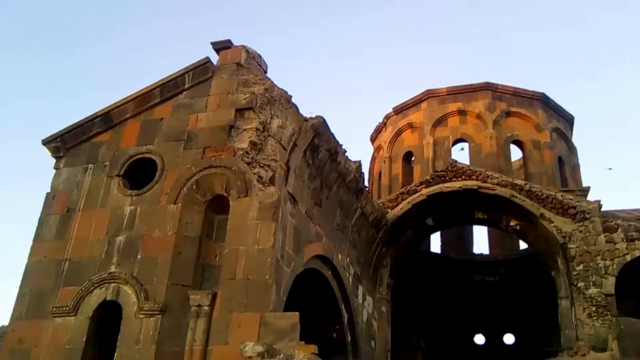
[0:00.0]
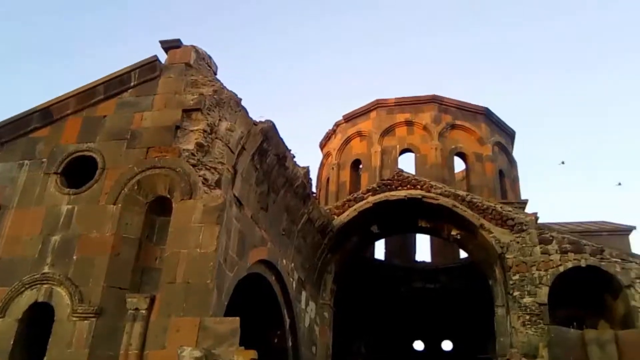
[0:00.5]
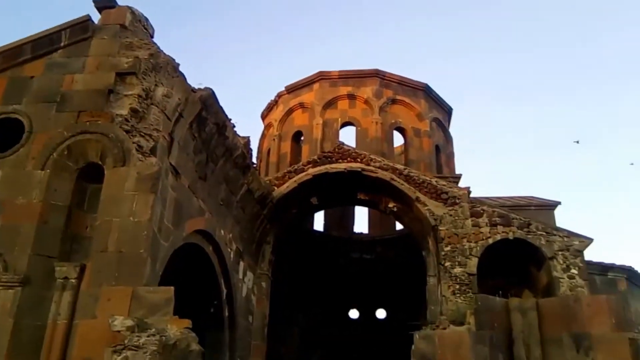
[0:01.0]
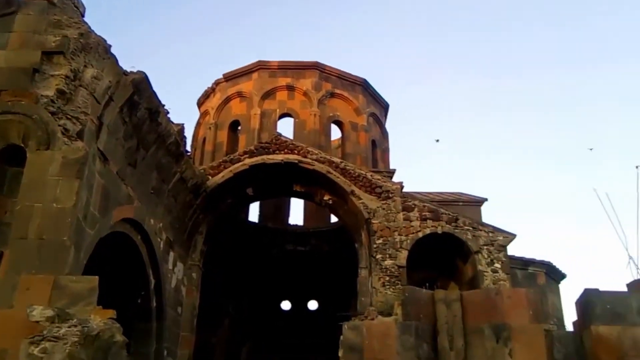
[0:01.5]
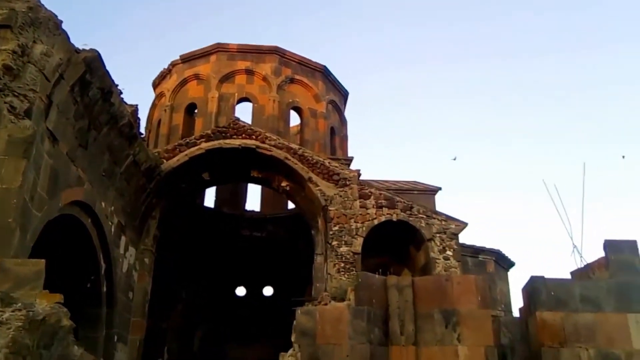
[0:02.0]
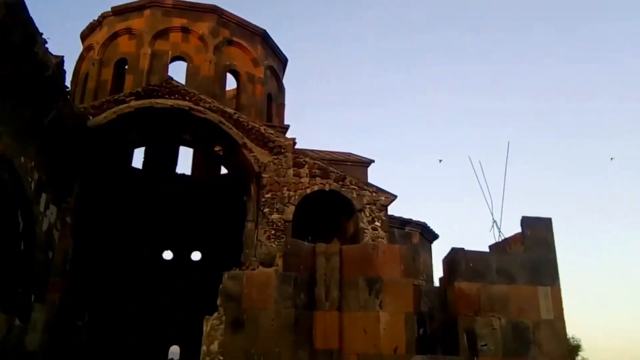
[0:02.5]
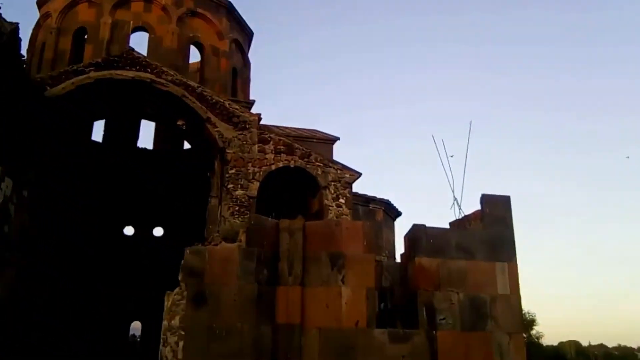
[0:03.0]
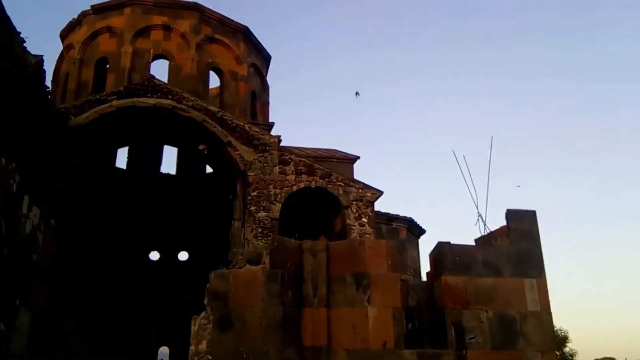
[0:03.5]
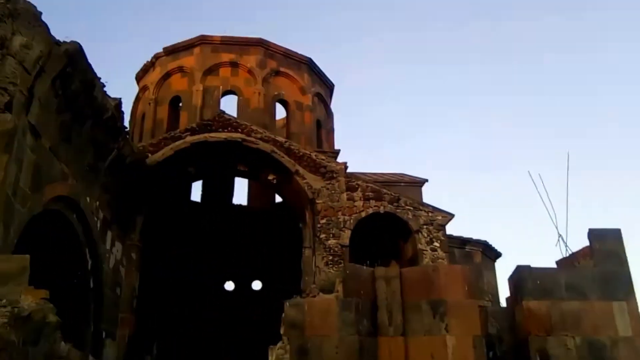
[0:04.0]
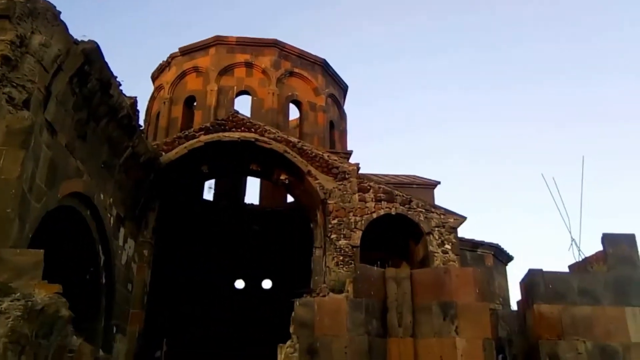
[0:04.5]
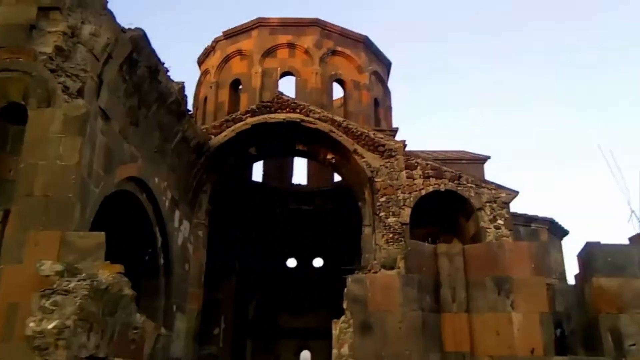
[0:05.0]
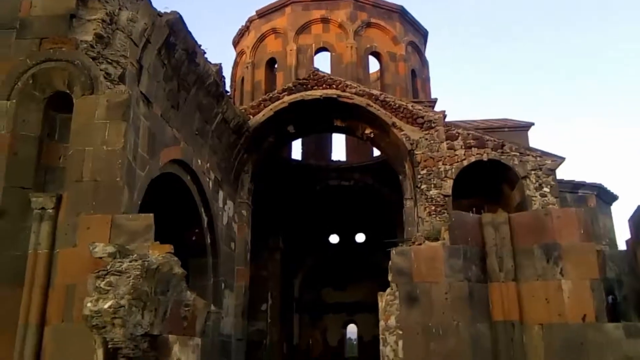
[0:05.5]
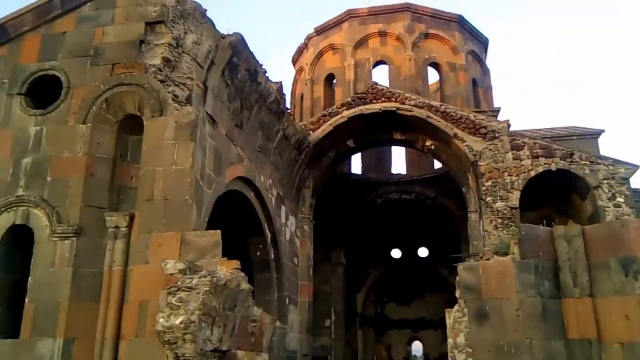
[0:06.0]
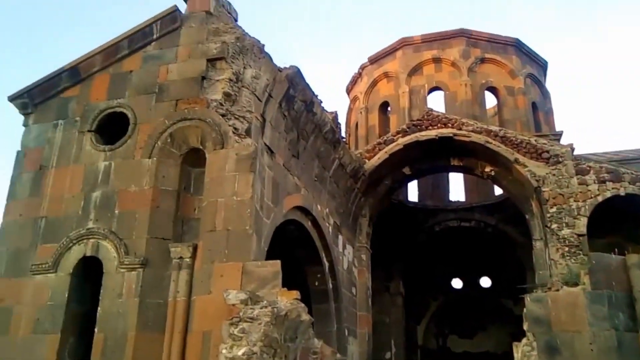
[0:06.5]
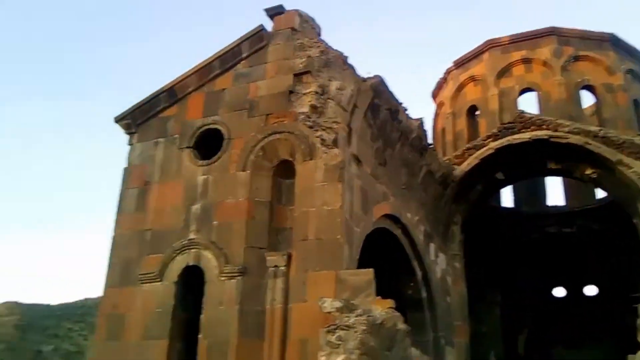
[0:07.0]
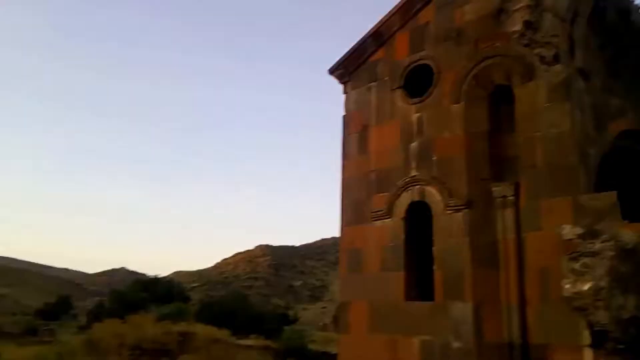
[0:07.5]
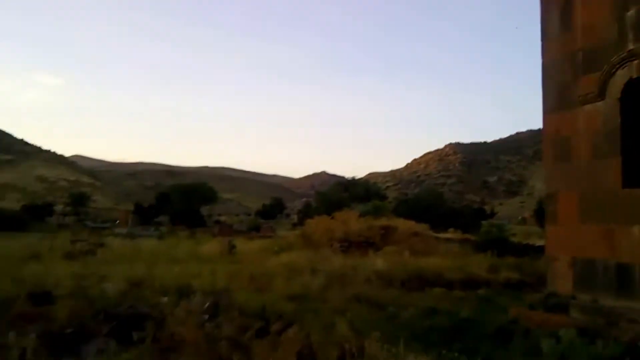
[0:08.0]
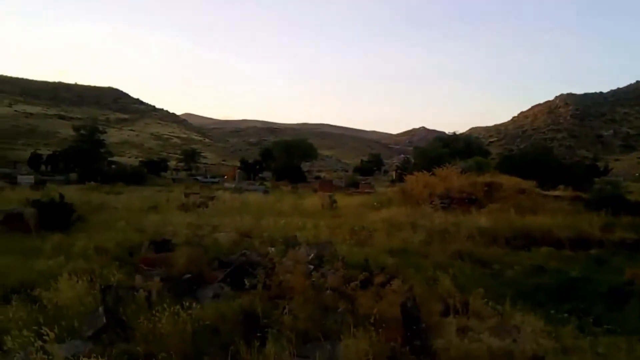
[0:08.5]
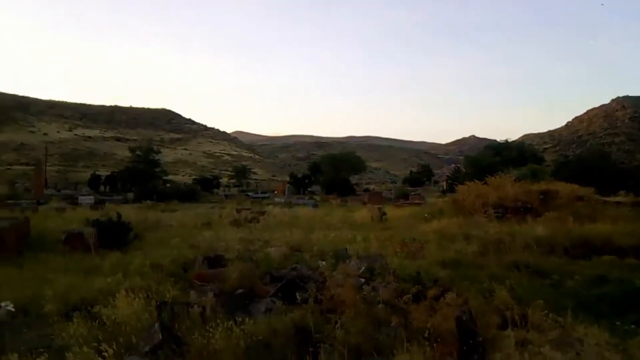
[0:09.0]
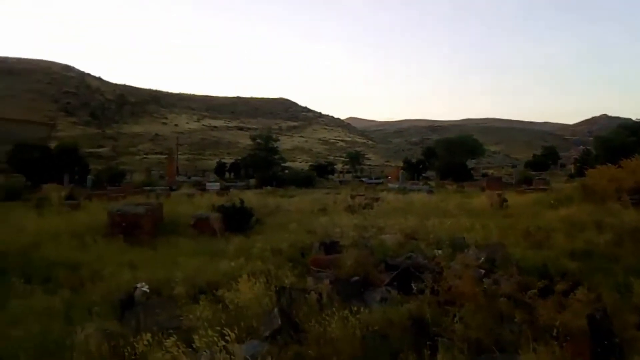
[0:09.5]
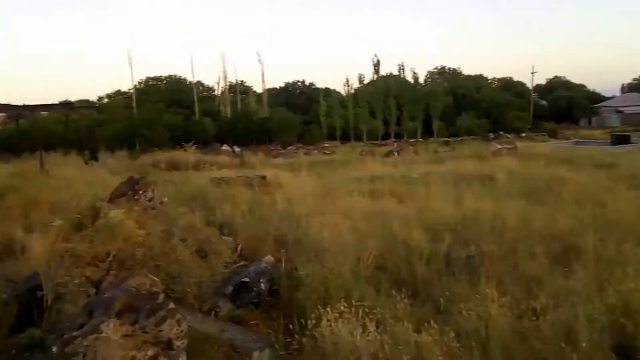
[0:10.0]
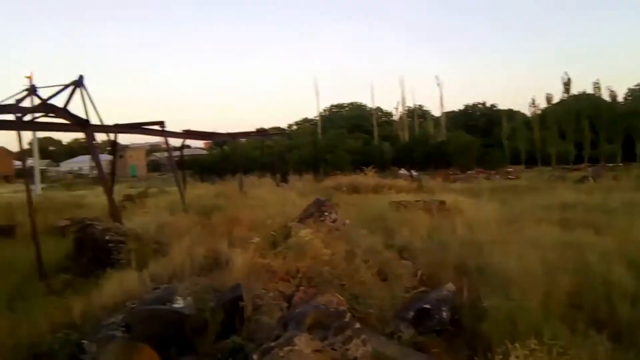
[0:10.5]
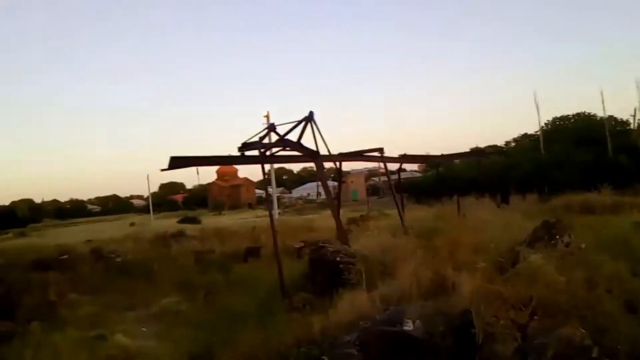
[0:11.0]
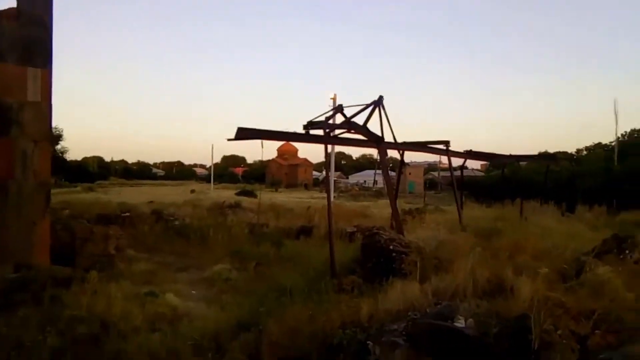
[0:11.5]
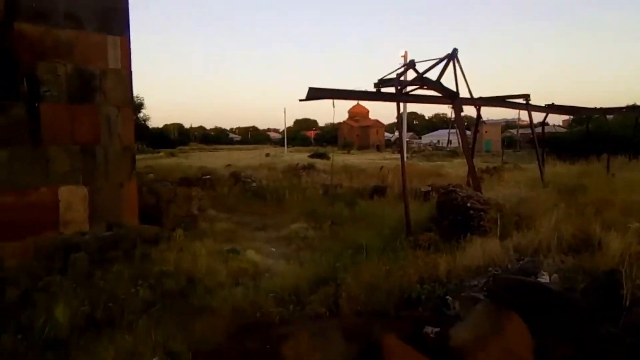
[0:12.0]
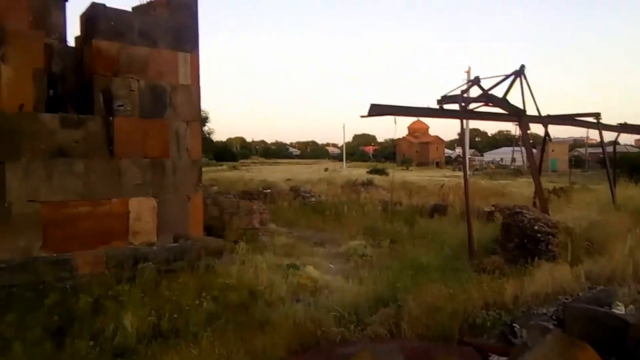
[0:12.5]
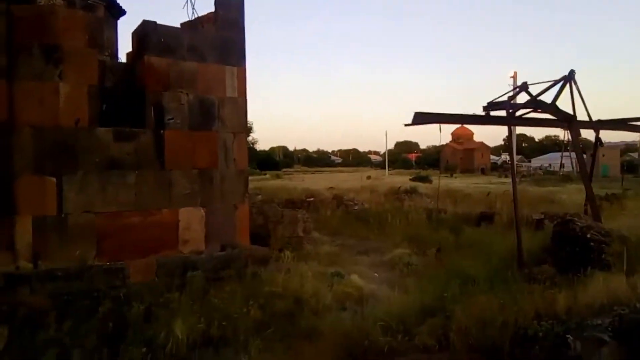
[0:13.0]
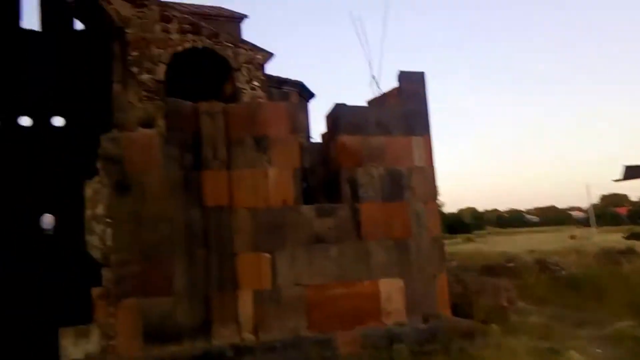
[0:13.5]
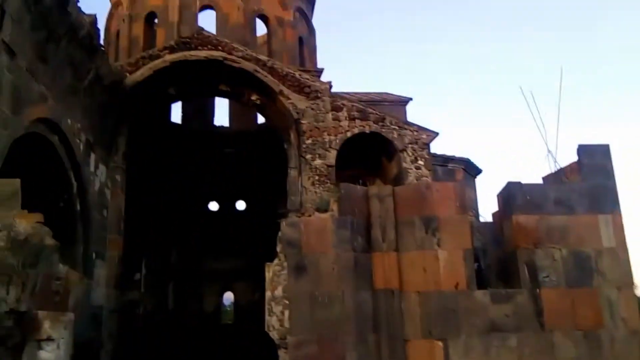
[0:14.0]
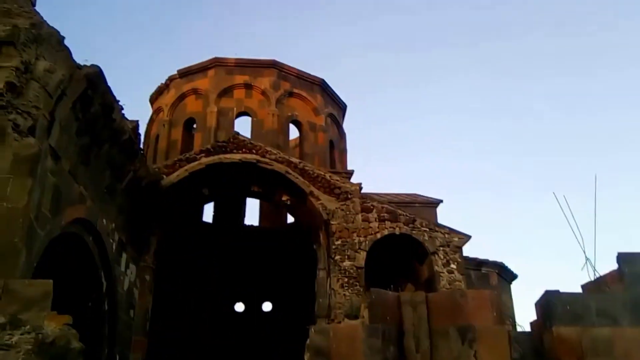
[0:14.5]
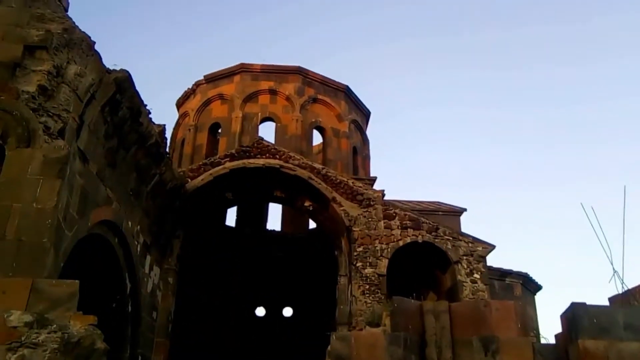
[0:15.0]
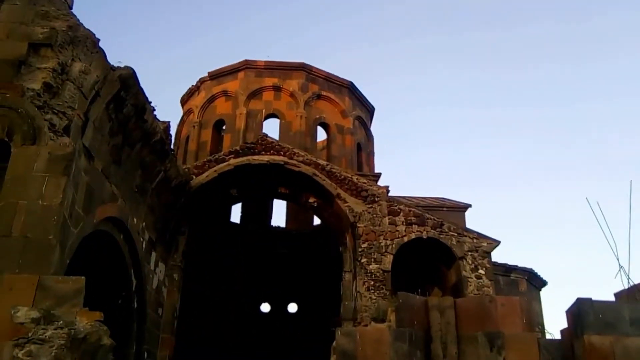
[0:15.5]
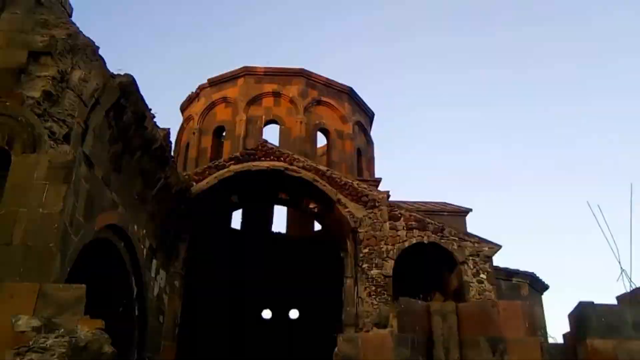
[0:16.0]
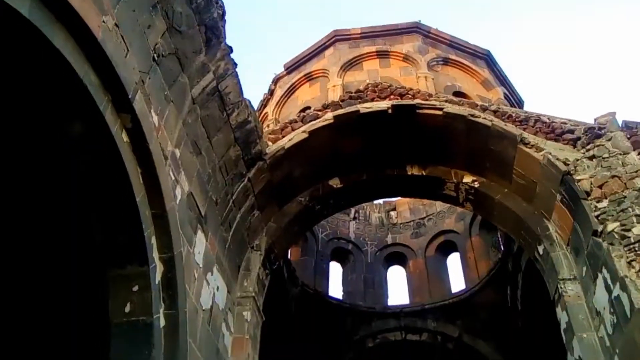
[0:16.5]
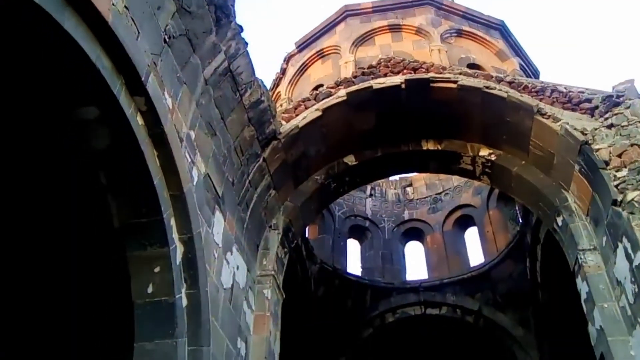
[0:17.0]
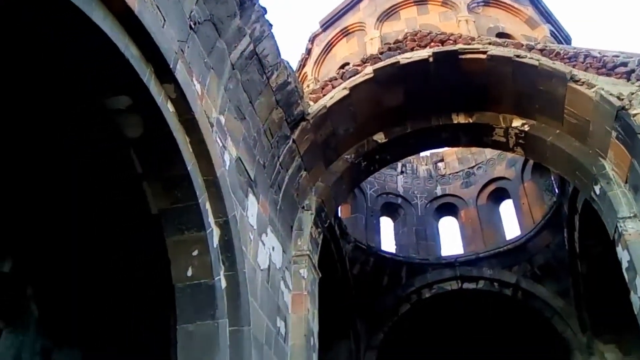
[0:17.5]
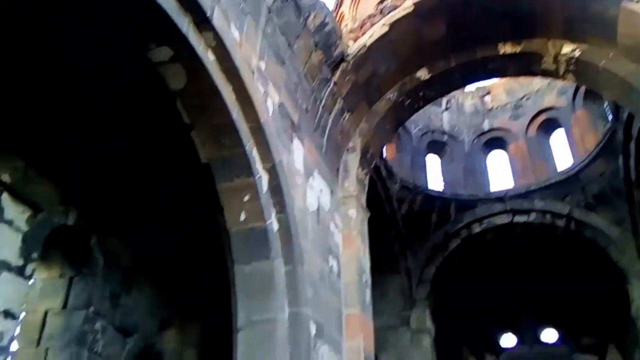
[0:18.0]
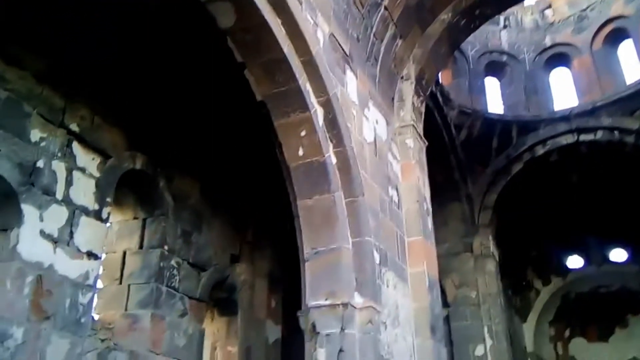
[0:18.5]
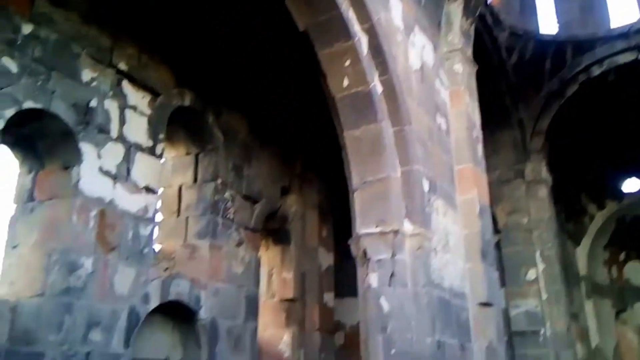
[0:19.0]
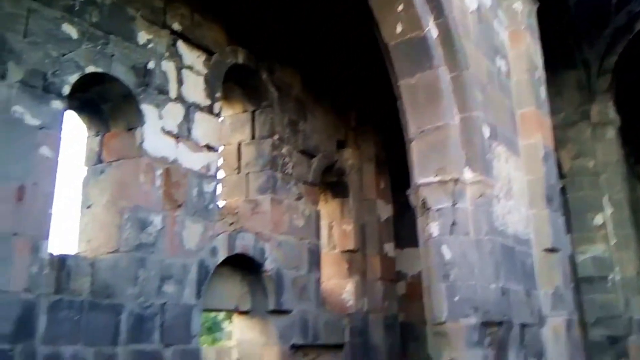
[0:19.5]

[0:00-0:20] An ancient building, probably hundreds of years old, stands partially in ruins. It looks like it could be a castle somewhere in Europe, or at least a building that looks like a castle, though exactly what it is remains hard to tell; it could be a defensive or military structure, or an old stone home. The top of it looks turreted. The structure is in the middle of a field, and there does not appear to be much around the field, but on the right there appears to be some type of city area.